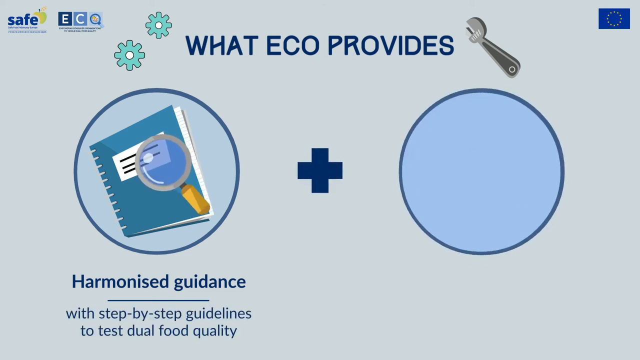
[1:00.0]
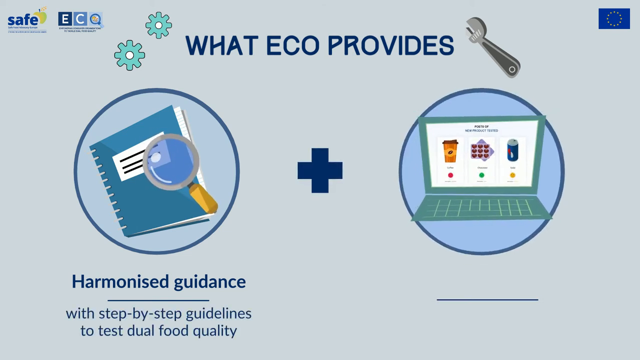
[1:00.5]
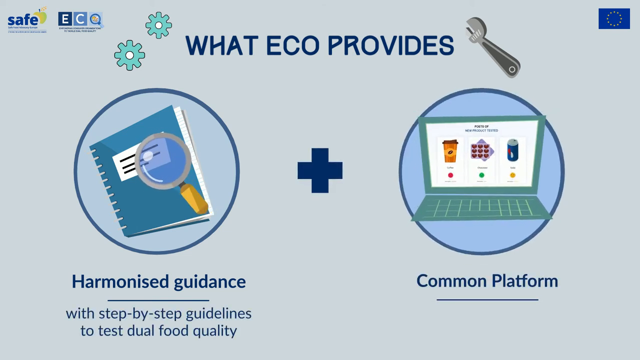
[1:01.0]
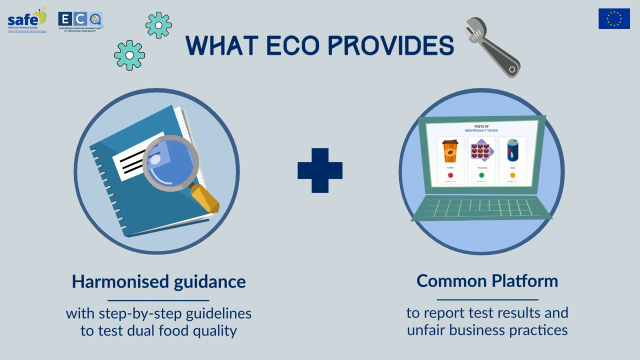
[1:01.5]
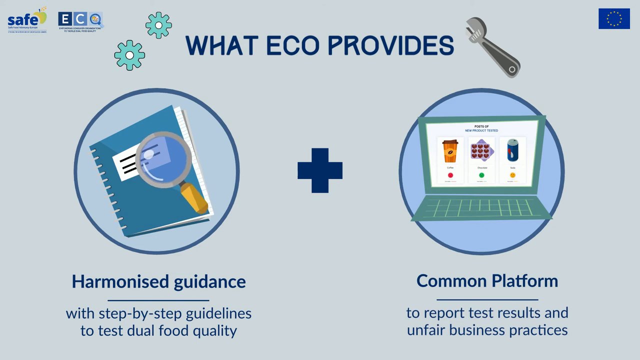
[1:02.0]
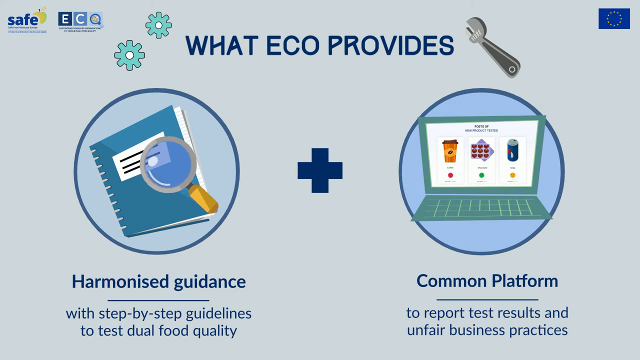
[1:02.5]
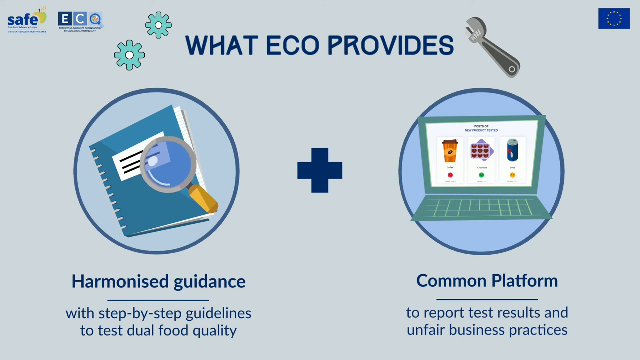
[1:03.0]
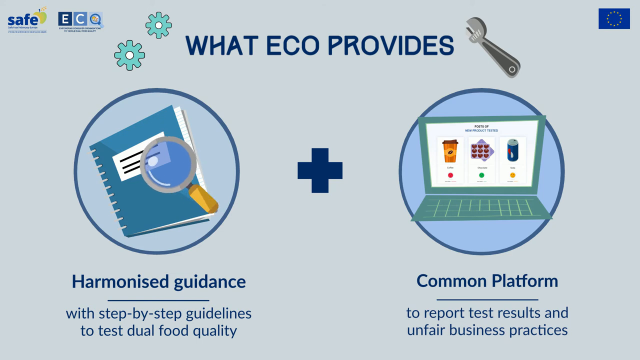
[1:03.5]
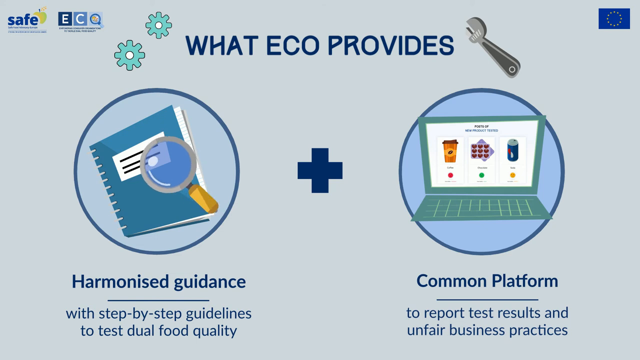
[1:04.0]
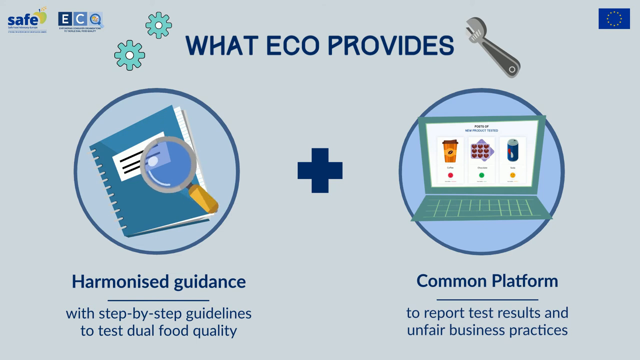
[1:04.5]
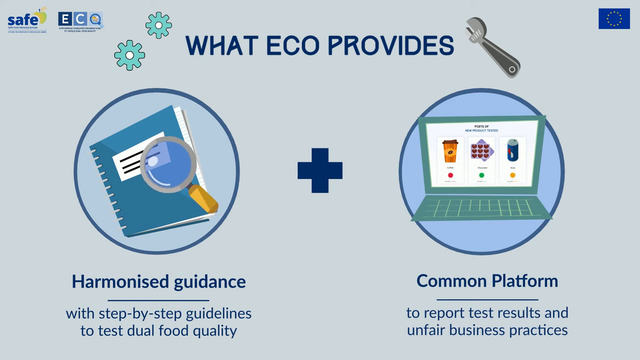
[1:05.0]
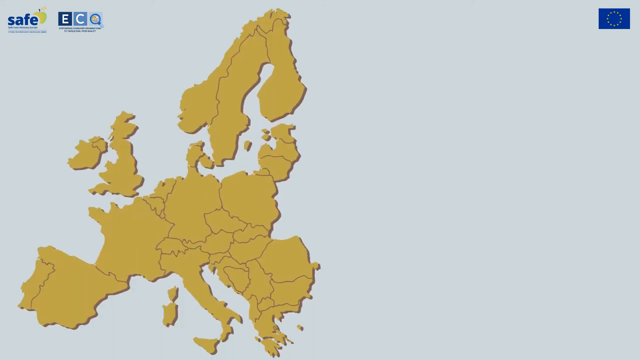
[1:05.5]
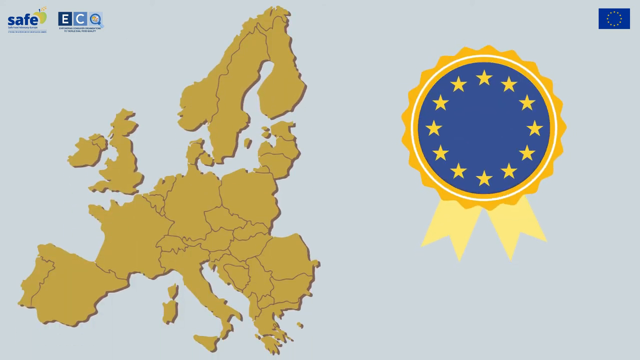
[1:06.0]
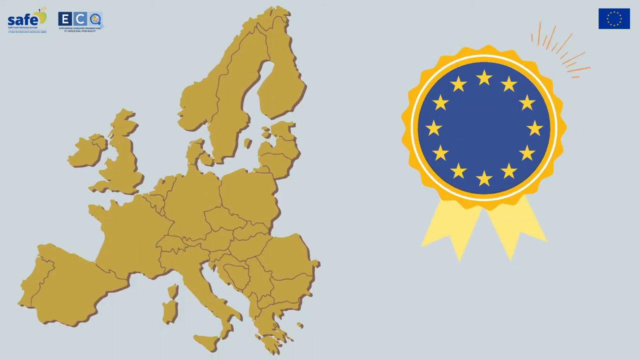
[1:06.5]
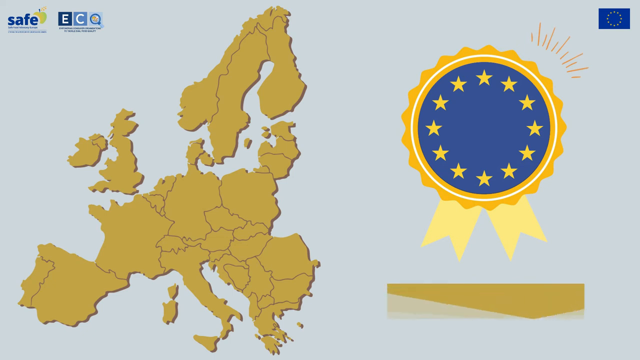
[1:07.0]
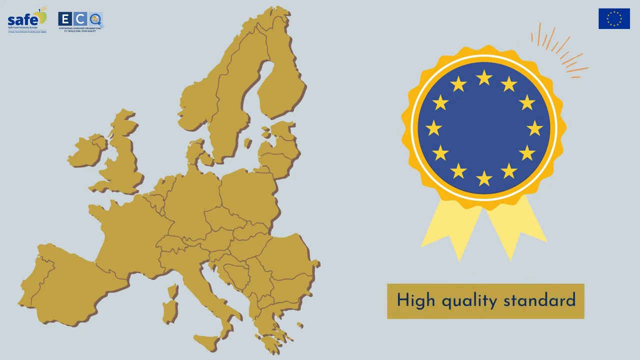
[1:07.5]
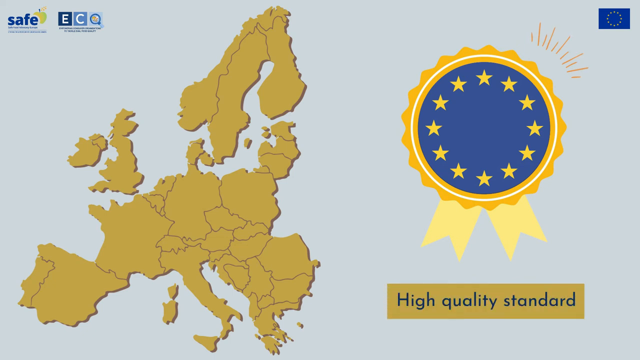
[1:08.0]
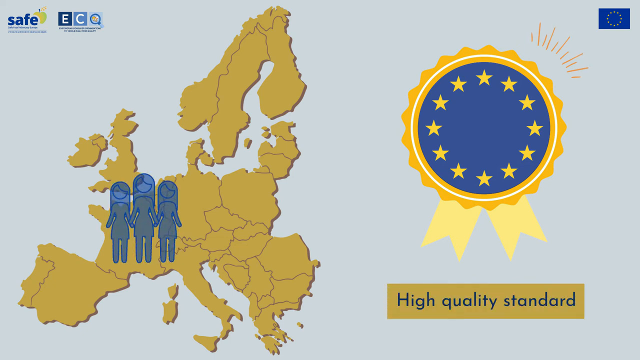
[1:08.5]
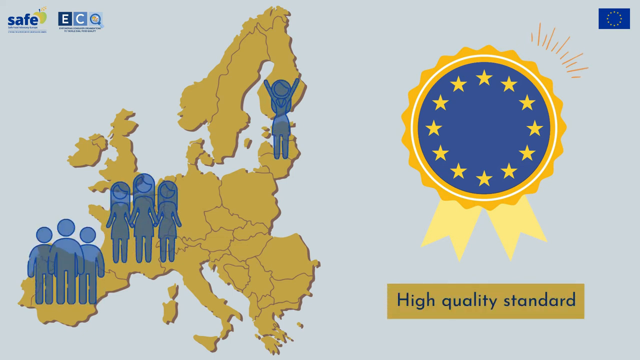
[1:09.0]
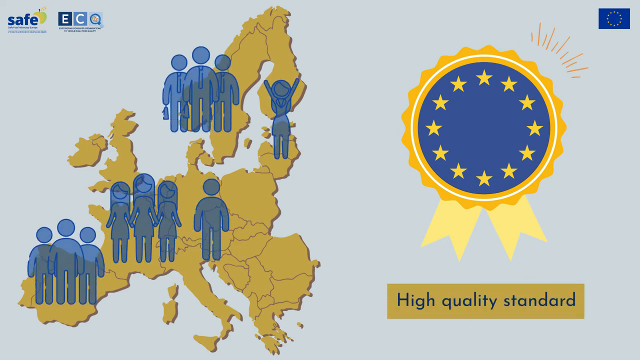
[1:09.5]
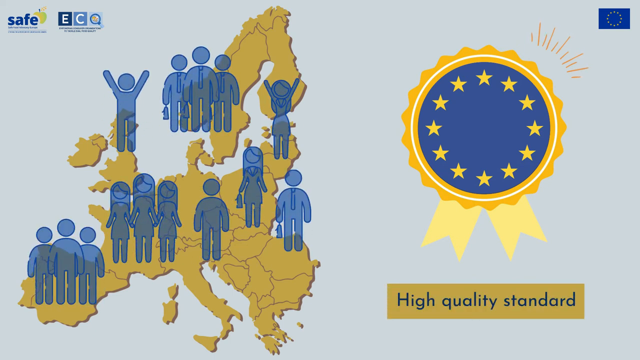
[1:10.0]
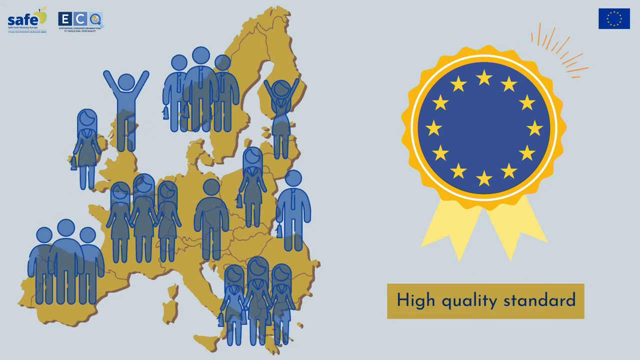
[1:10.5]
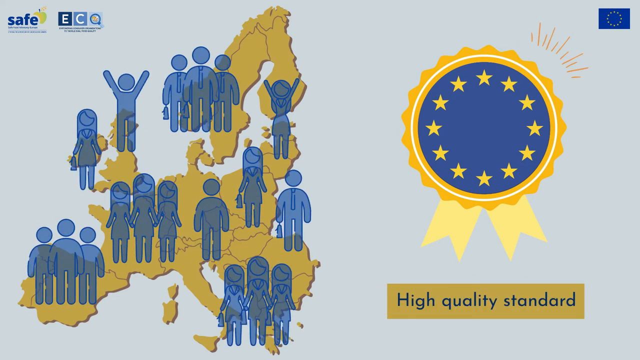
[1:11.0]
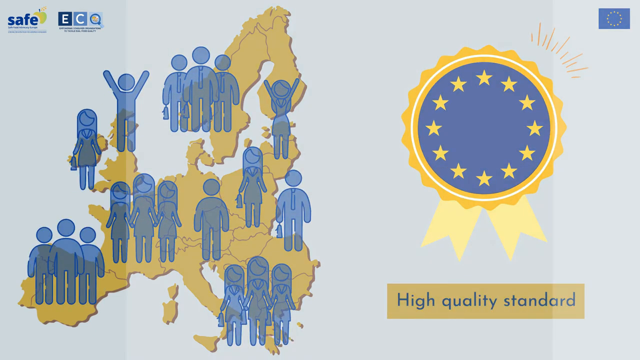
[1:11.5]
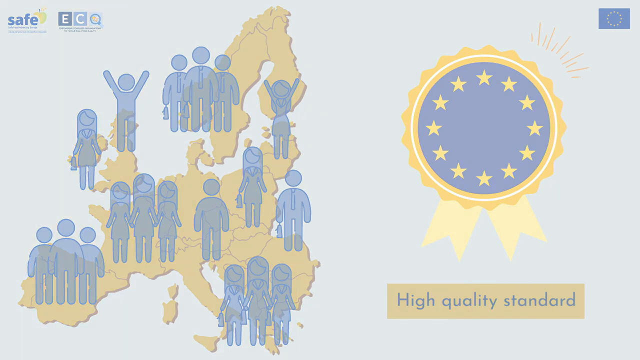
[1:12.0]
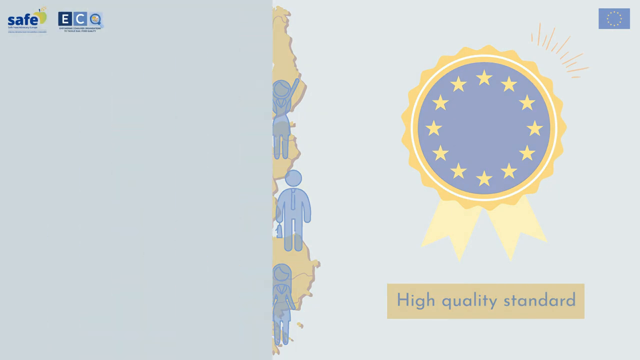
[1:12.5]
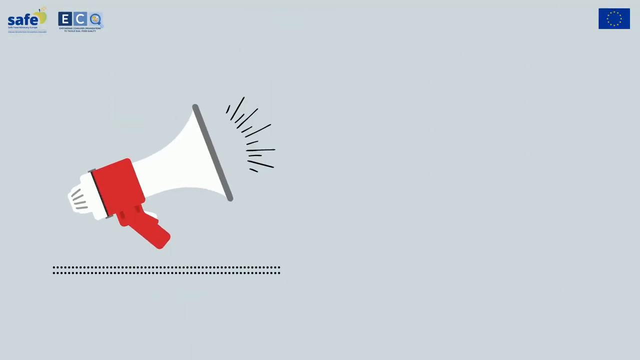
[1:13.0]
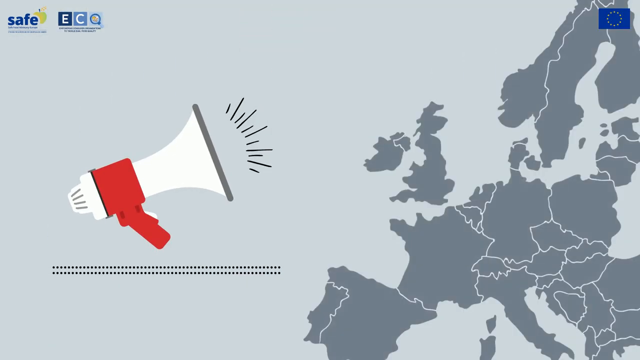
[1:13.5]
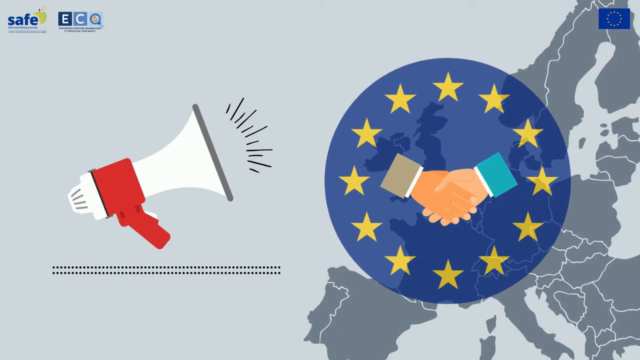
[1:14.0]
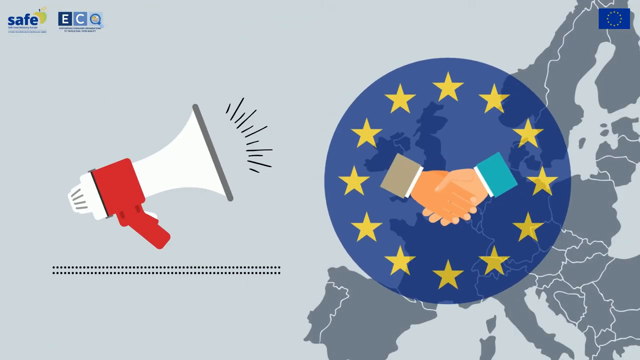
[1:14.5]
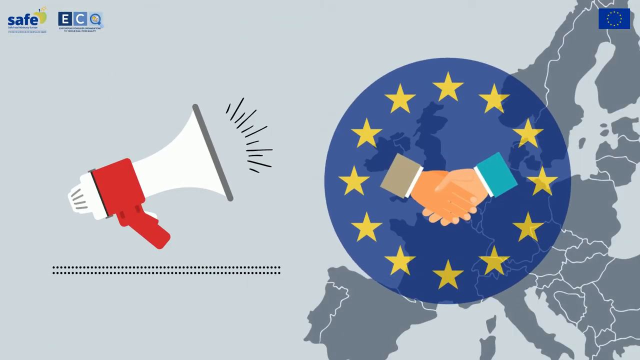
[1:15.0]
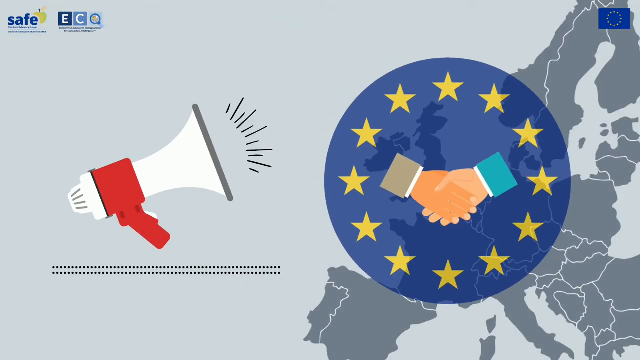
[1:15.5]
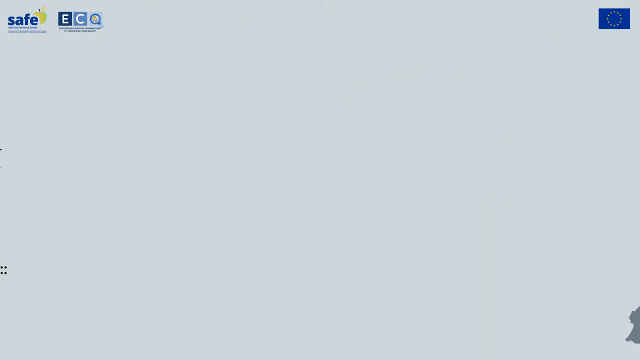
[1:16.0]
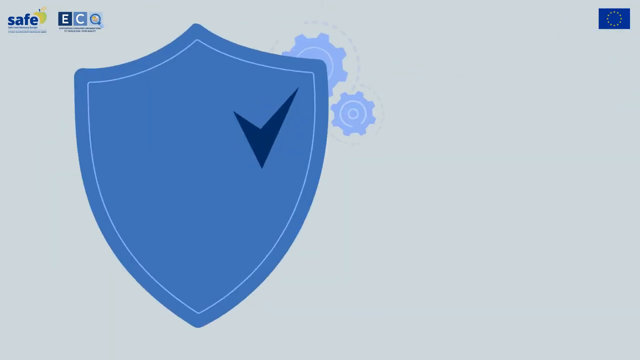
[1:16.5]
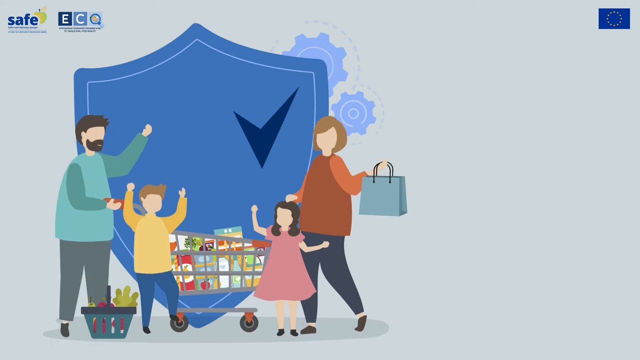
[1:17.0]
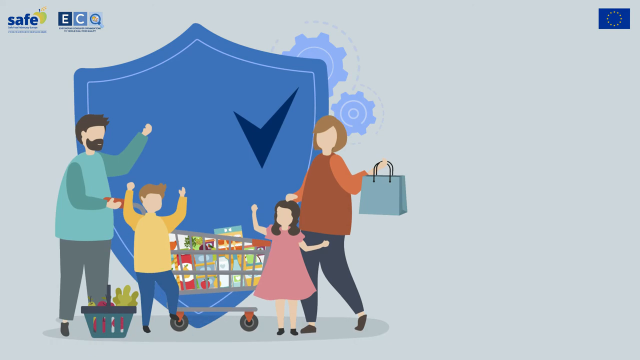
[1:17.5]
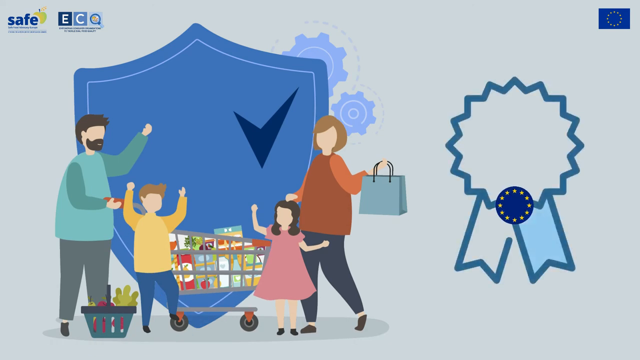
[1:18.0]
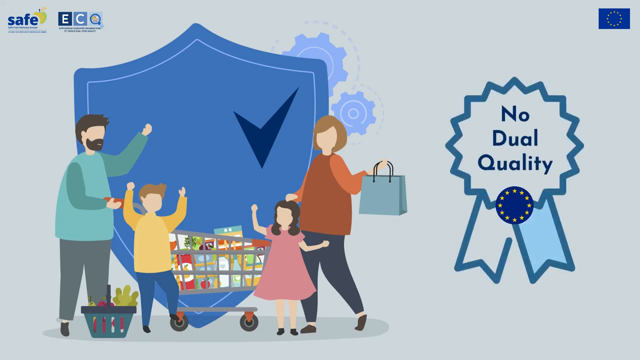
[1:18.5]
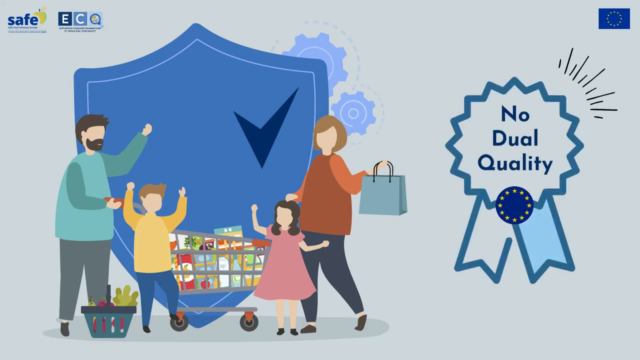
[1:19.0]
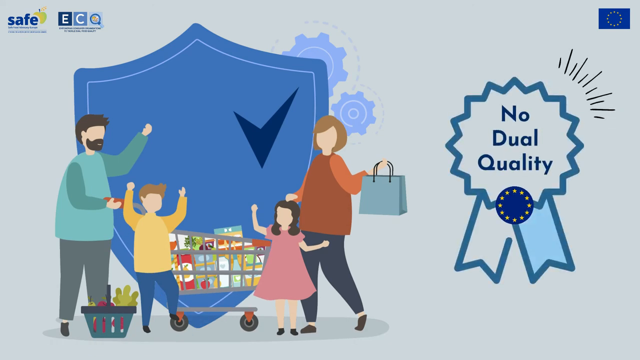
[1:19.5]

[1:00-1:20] The screen shows "harmonized guidance" and "step-by-step guidelines" with the circle containing the notebook and magnifying glass, a plus symbol in the middle, the computer screen (a laptop) in a circle, and "common platform". The magnifying glass moves a little. A map pops up to the left and a reward ribbon to the right, with "high quality standard" appearing beneath the ribbon, and different groups of people pop up on the map, blue and outlined in darker blue. The screen switches to a megaphone with a red handle and a white longer part, then a map pops up with a blue circle of yellow stars around its outer part on top of it, and two hands shake: a darker one with a gray sleeve and a lighter one with a blue sleeve. It then switches to an armor symbol, and a family pops up with a grocery cart in the center. There are two small kids: a blonde boy in a yellow shirt and blue jeans, and a girl in a pink dress with shoulder-length black hair. The mom carries a bag and wears a darker orange shirt and blue jeans, with a blonde neck-length bob. The dad has a lot of facial hair and blackish, kind of shaggy hair. Beside the family an award ribbon pops up with "no dual quality" on the inside.